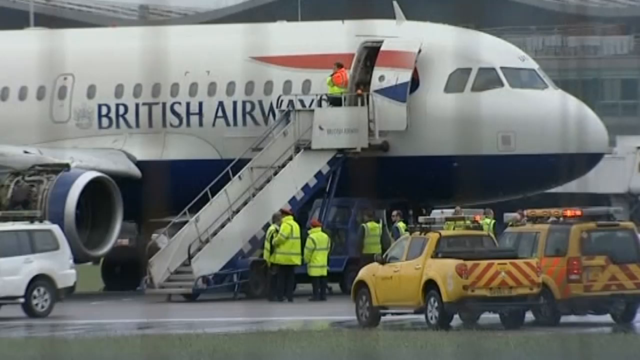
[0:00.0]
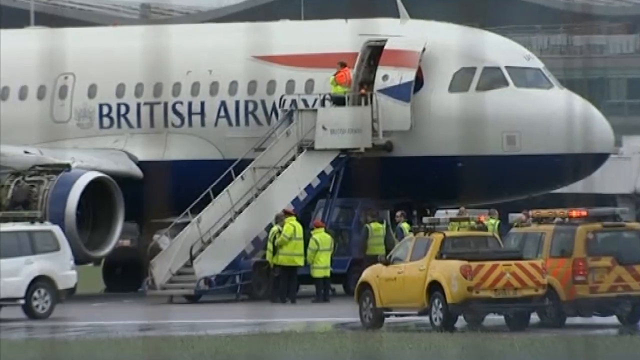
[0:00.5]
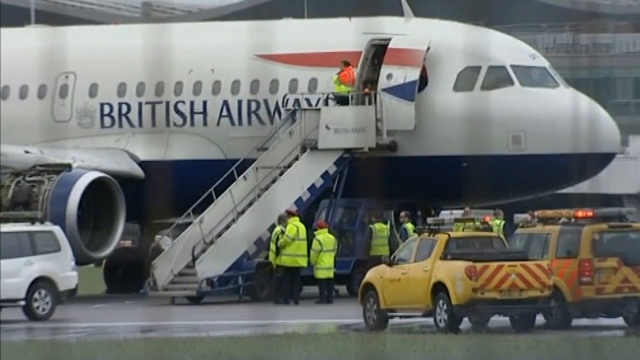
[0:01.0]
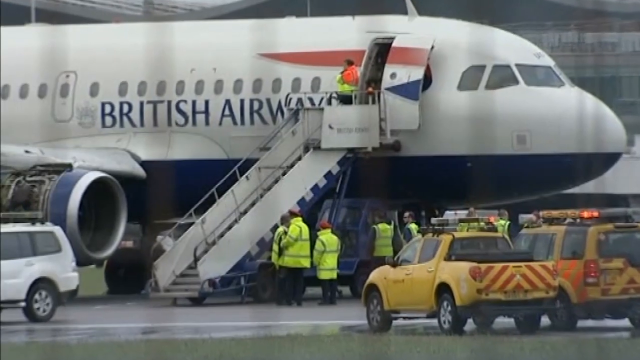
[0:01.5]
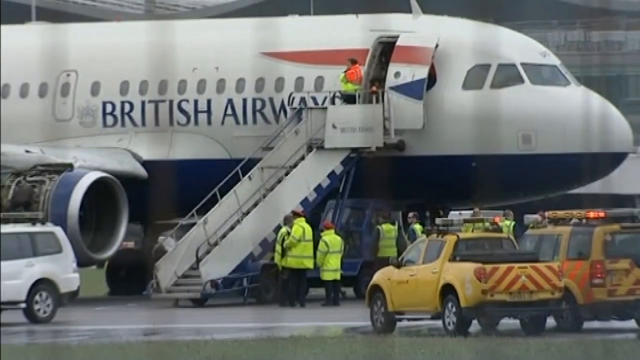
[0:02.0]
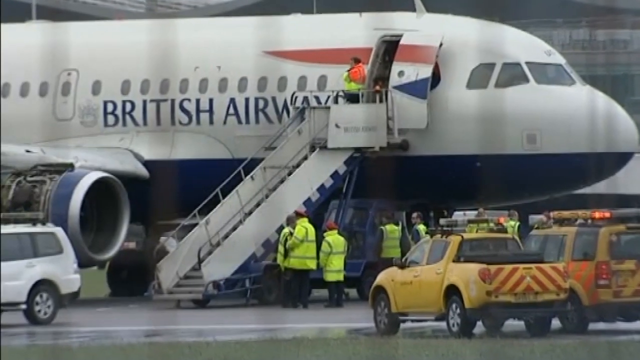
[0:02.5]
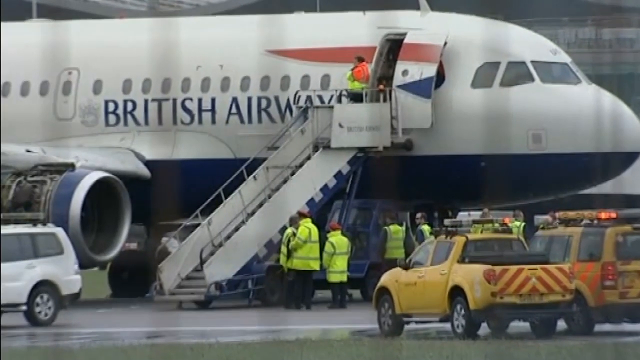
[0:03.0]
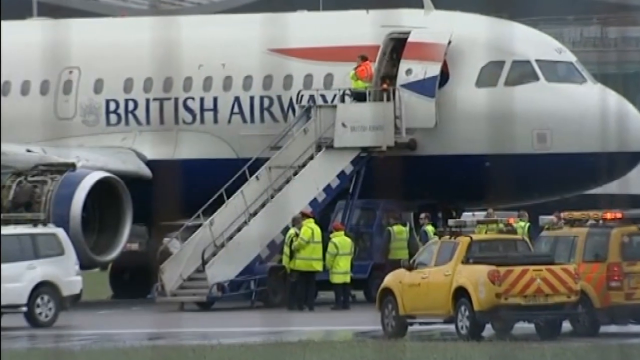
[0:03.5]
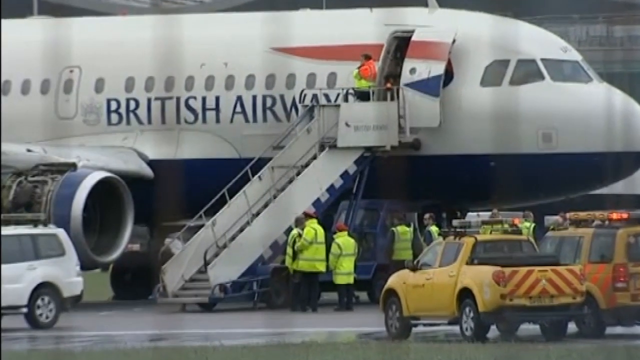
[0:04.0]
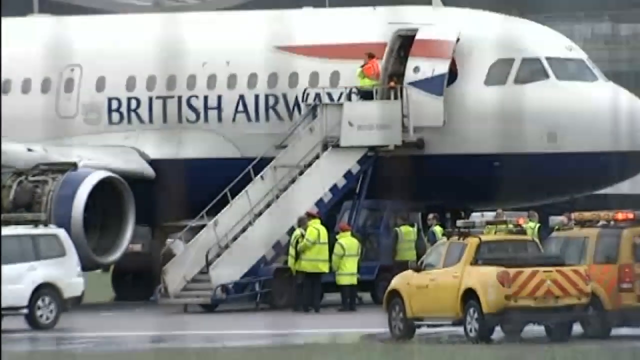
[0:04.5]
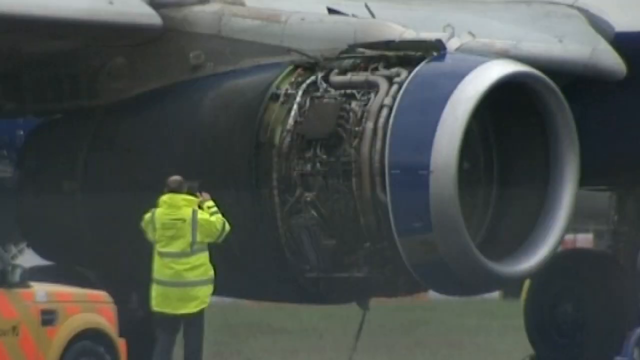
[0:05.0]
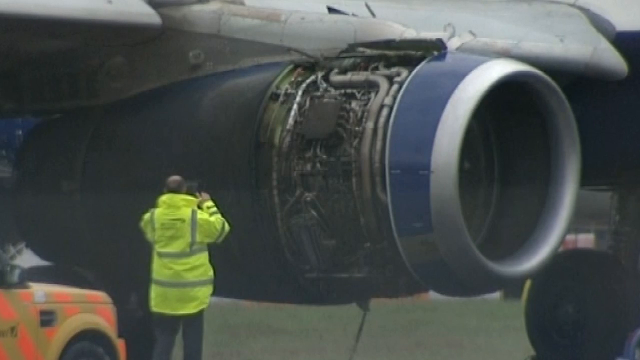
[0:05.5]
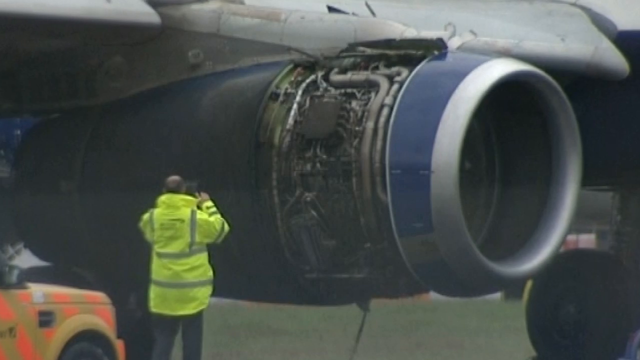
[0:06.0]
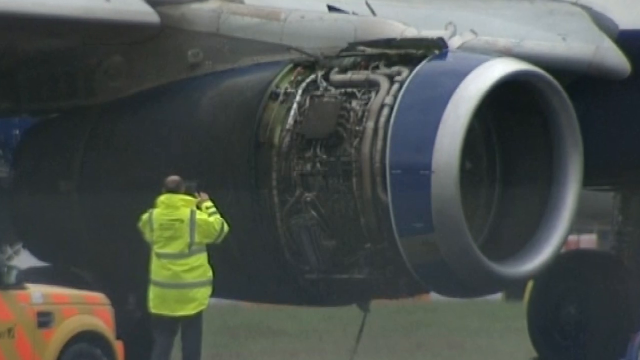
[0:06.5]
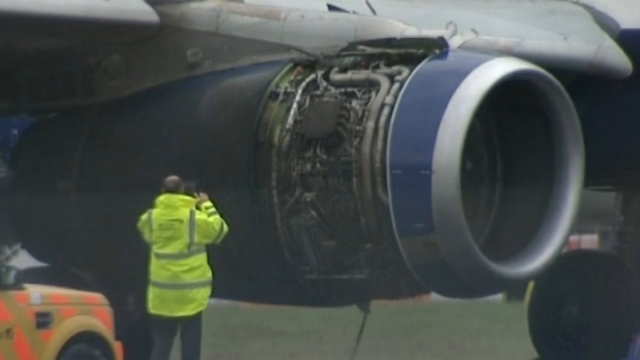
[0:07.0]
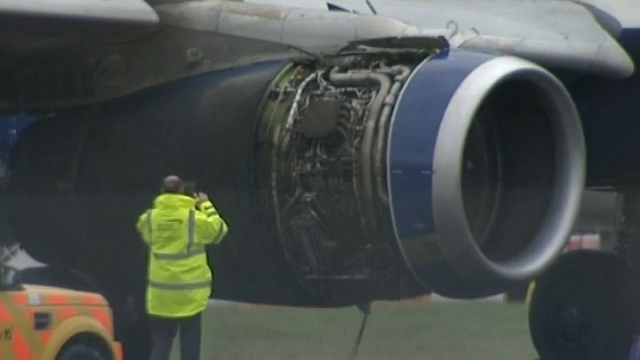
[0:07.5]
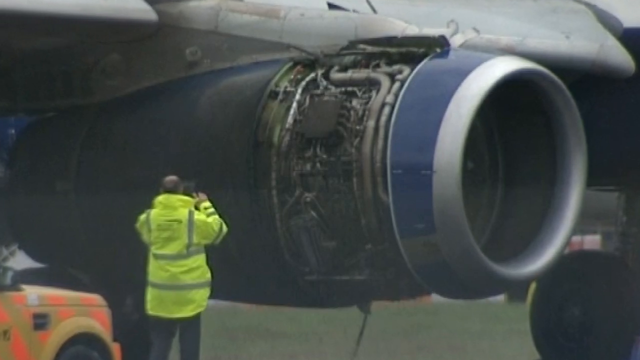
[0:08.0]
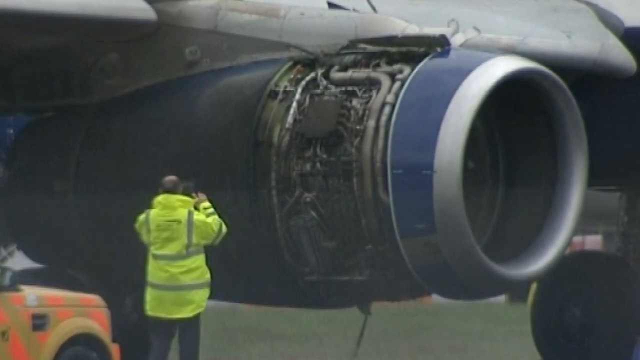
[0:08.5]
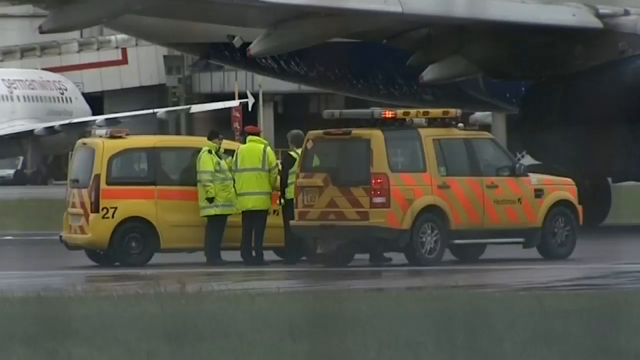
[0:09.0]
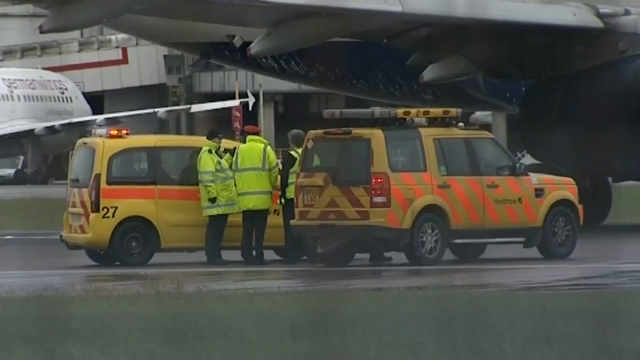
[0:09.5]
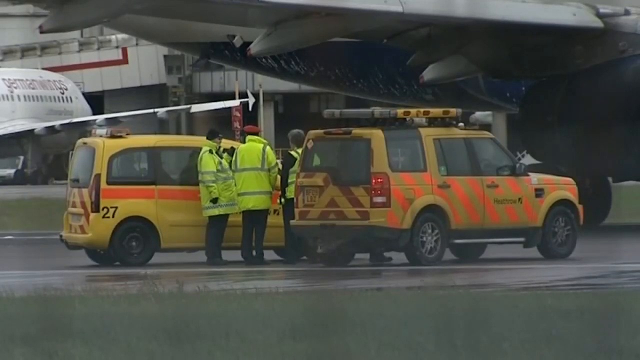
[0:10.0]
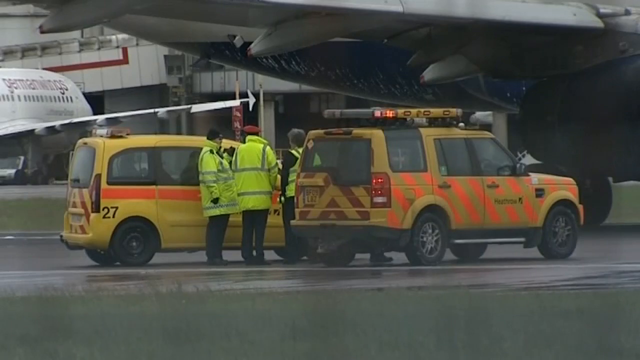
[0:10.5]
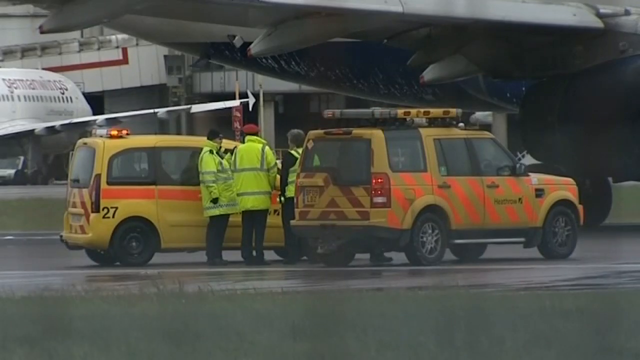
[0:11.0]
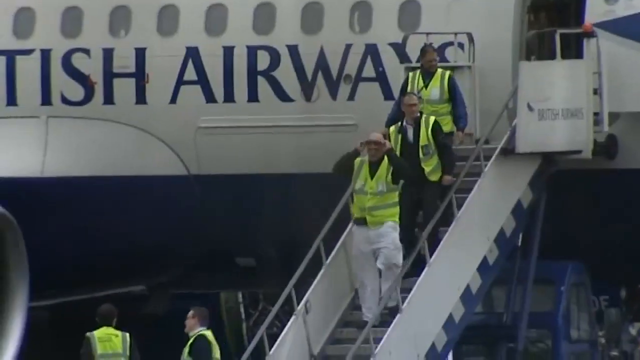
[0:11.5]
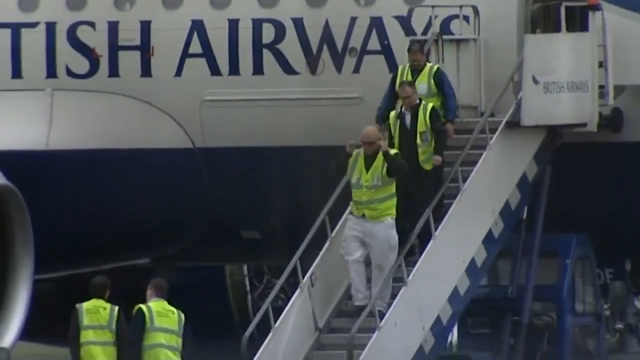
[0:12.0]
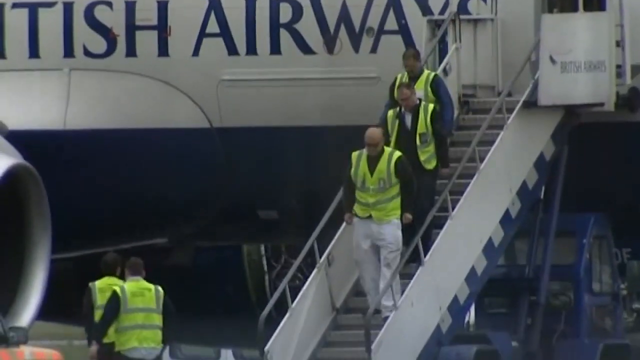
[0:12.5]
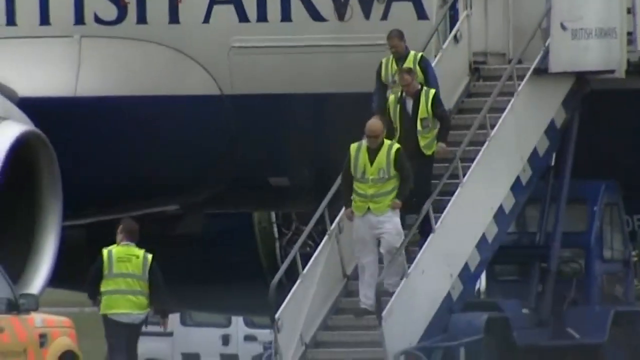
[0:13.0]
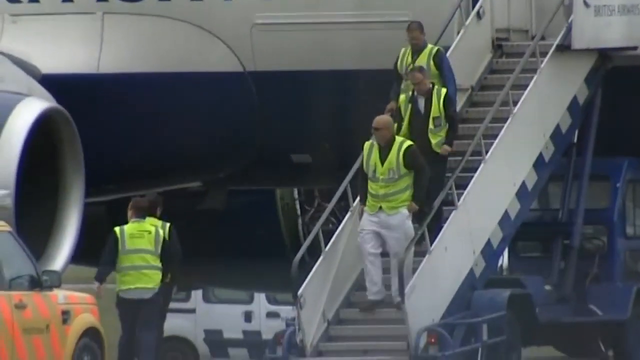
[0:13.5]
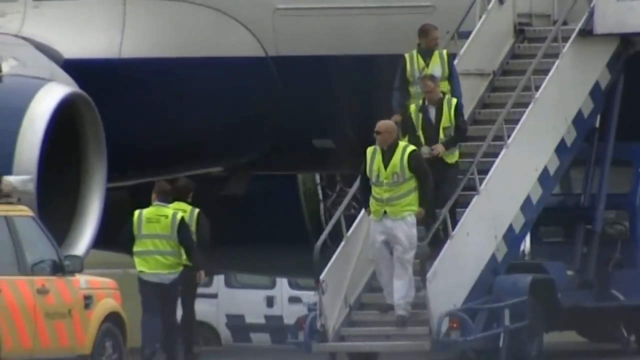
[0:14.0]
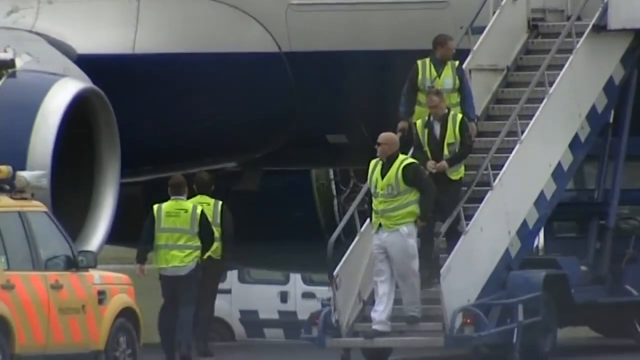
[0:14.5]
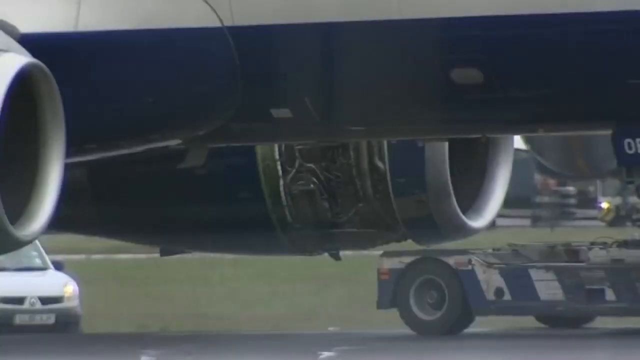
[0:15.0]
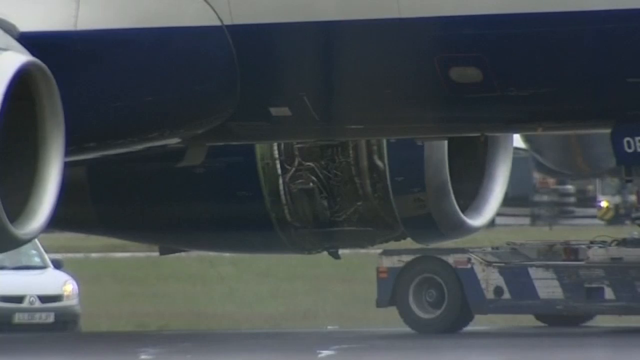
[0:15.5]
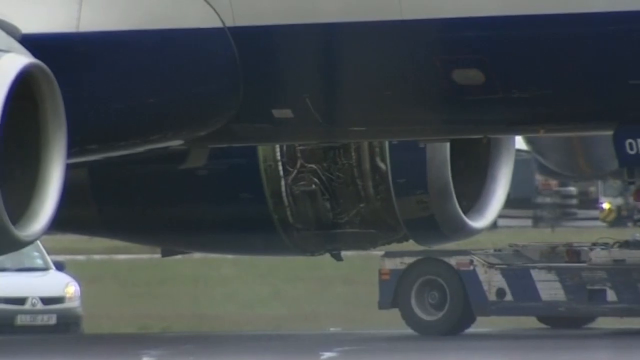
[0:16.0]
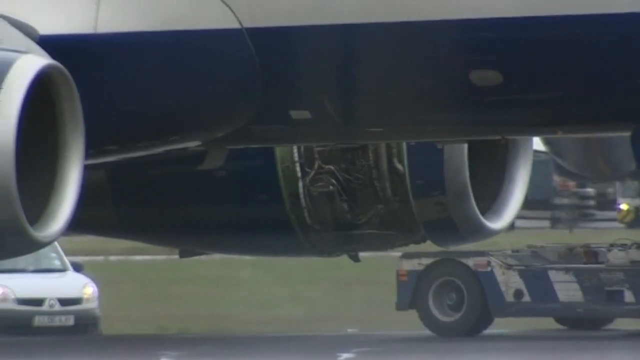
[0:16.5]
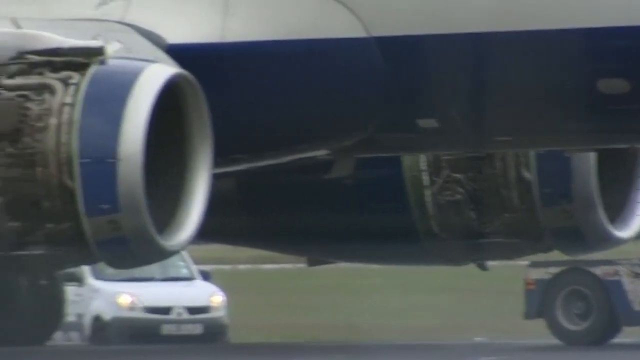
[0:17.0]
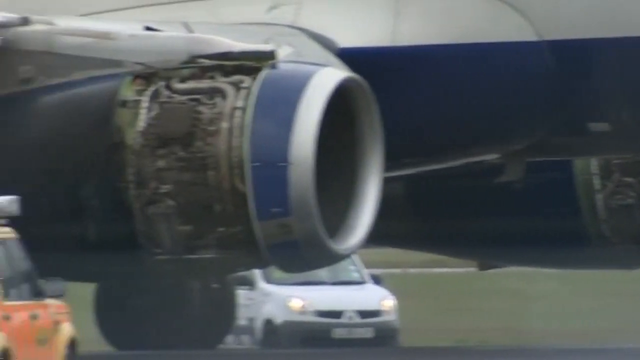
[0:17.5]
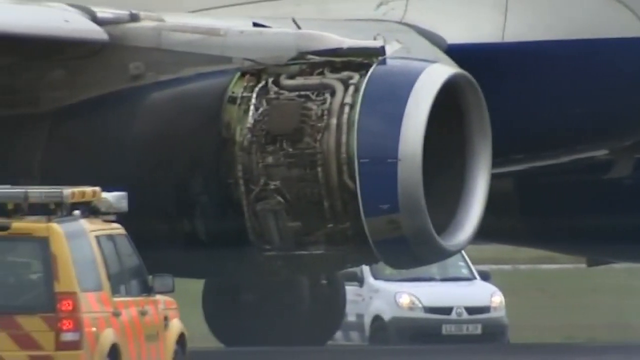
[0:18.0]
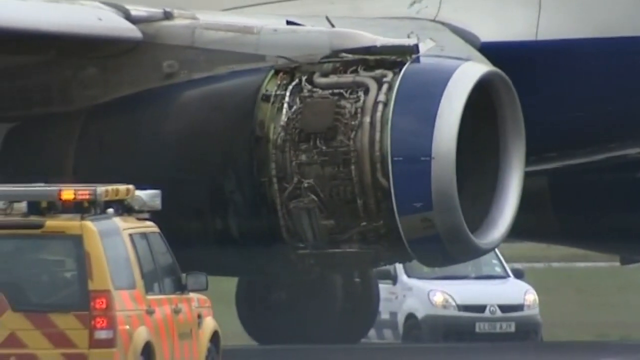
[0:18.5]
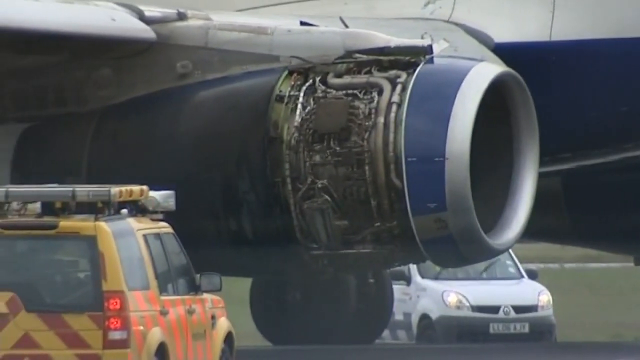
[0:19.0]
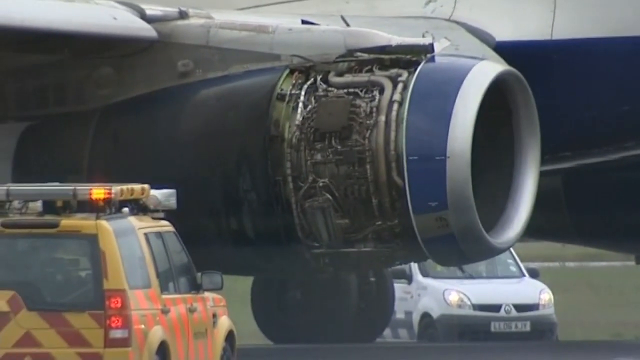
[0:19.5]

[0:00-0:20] A picture shows a giant airplane that appears to be from British Airways, judging by the text on its side near the tip of the plane. The plane looks very thick and big. Someone in something like a neon green jacket is standing near the entrance, and a lot of other people are at the bottom; they seem to be doing maintenance on it. In the next picture, people appear to be taking pictures of and looking at the exhaust of the airplane, where the fans go round. Footage then shows people wearing neon green jackets walking off the plane, apparently doing maintenance, and looks at these people as well as the engines on the sides of the plane, which have their shielding ripped out so their insides are visible.